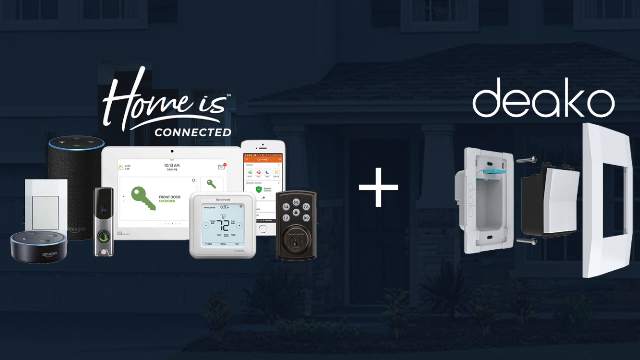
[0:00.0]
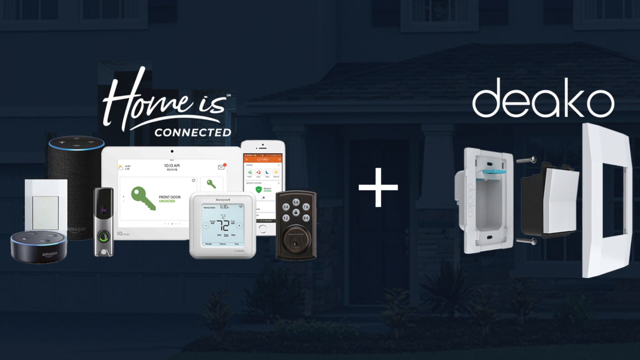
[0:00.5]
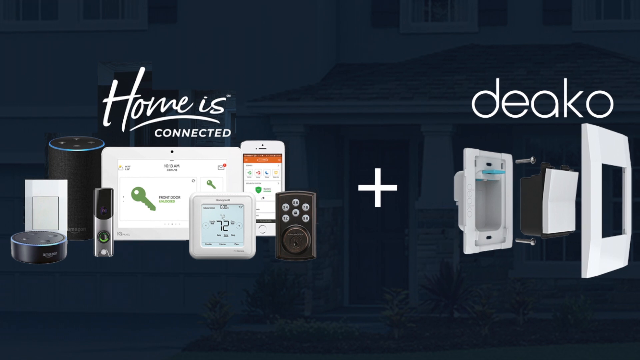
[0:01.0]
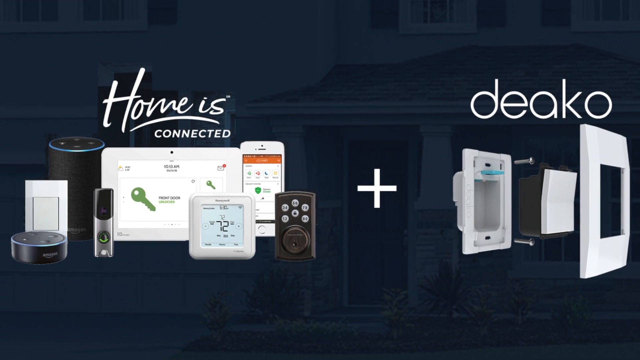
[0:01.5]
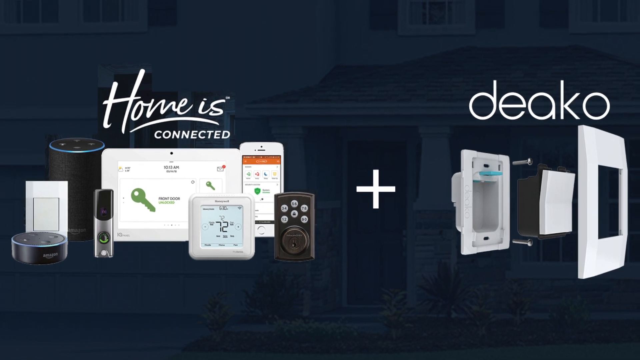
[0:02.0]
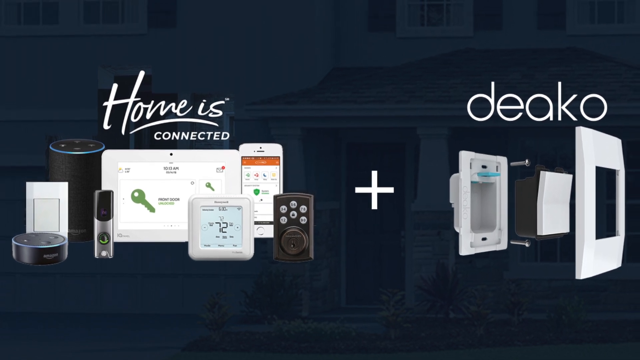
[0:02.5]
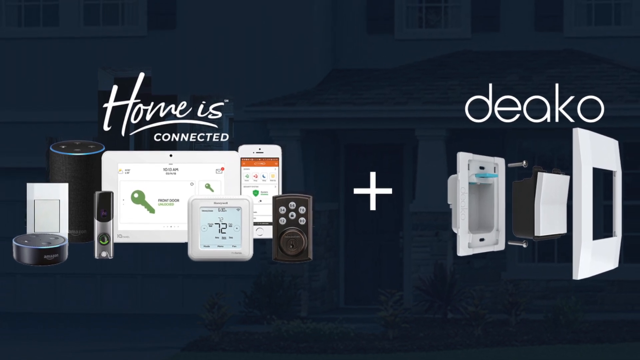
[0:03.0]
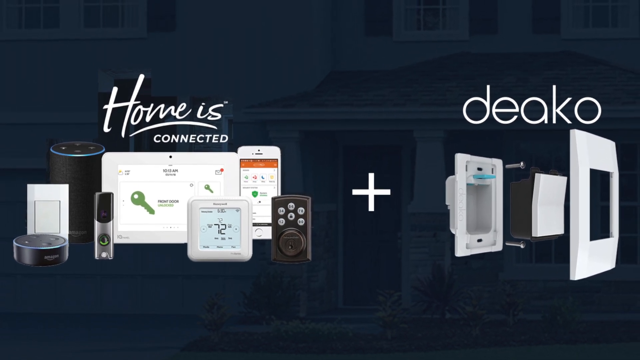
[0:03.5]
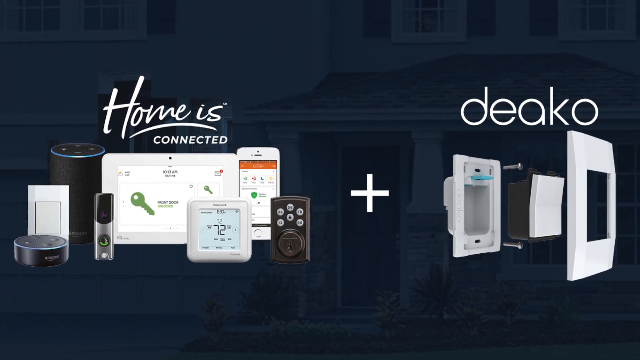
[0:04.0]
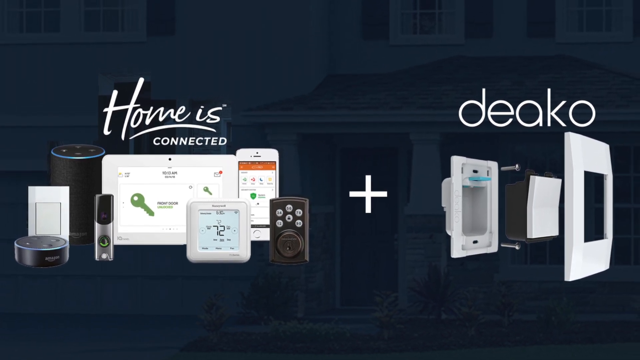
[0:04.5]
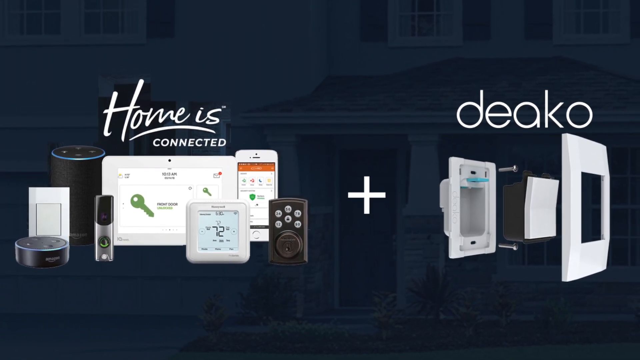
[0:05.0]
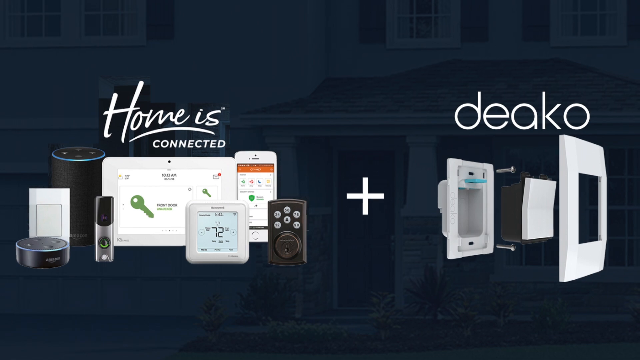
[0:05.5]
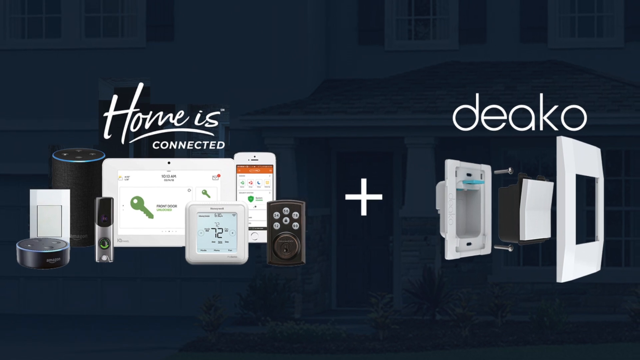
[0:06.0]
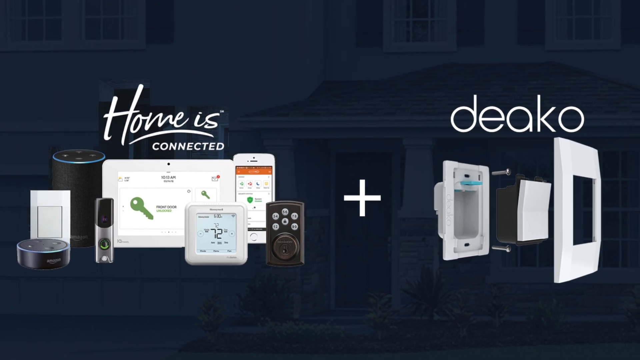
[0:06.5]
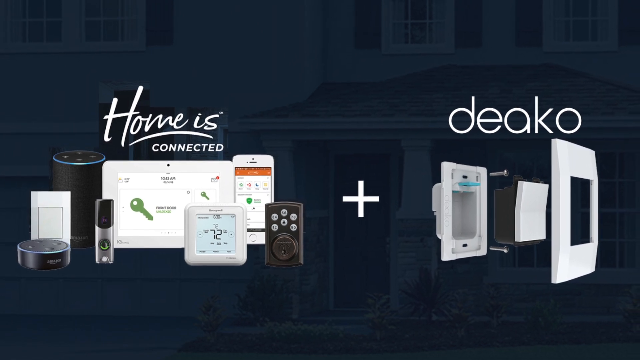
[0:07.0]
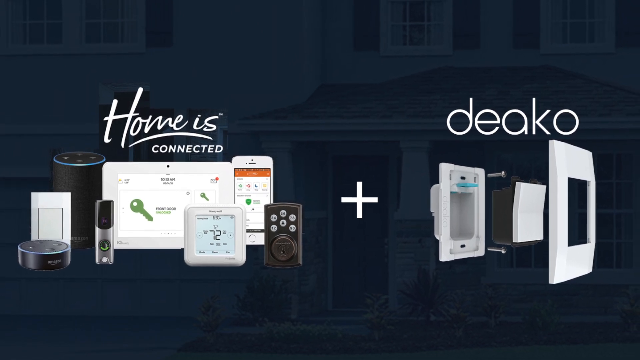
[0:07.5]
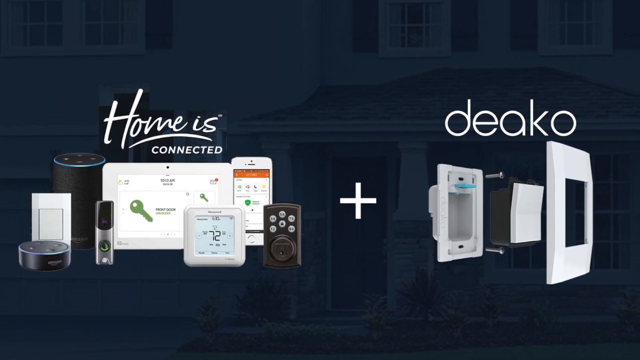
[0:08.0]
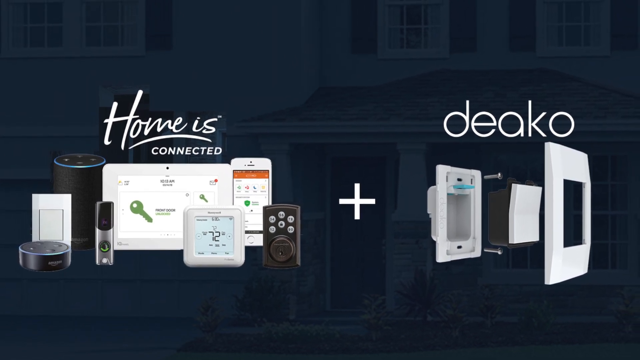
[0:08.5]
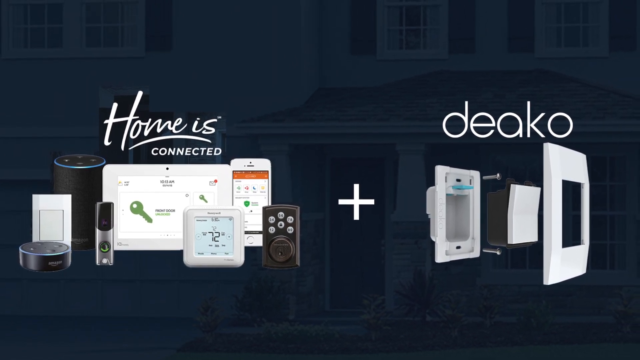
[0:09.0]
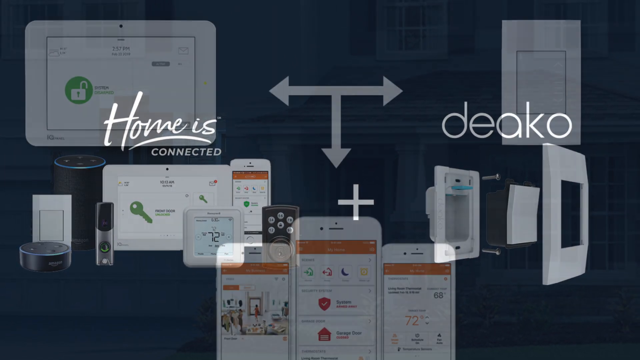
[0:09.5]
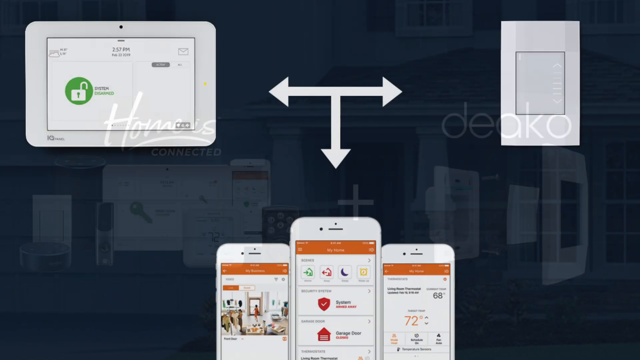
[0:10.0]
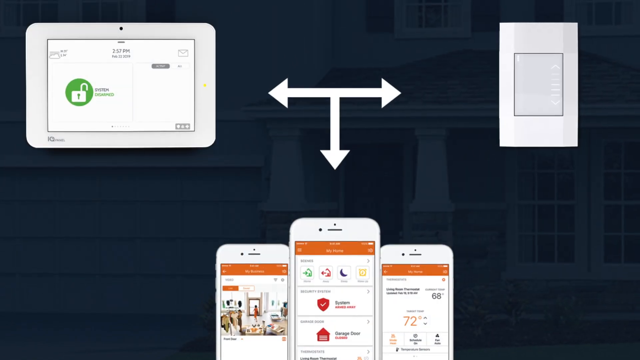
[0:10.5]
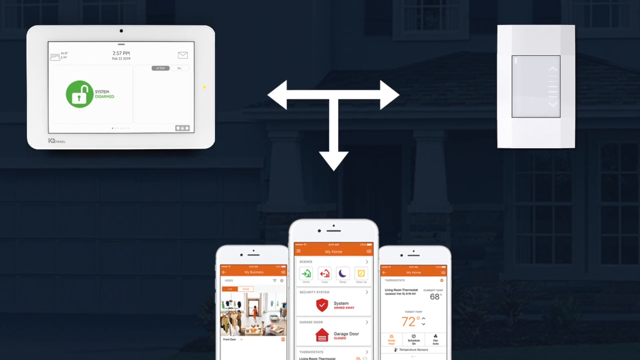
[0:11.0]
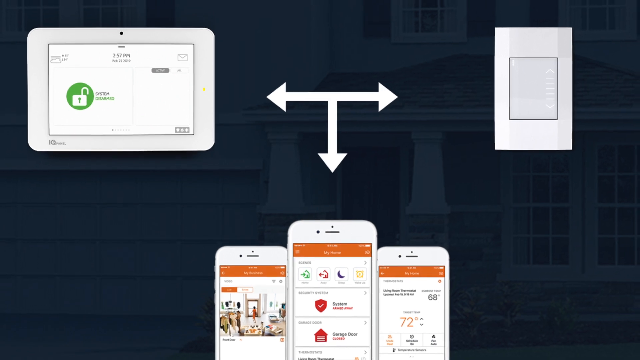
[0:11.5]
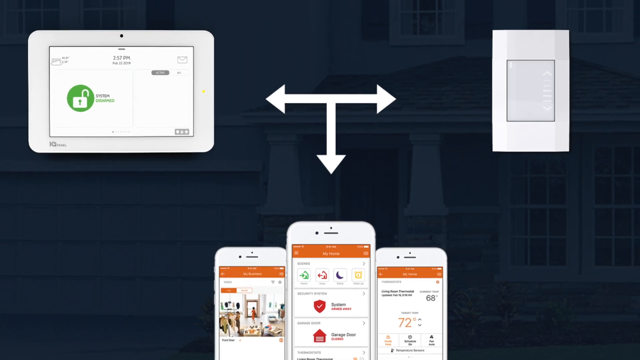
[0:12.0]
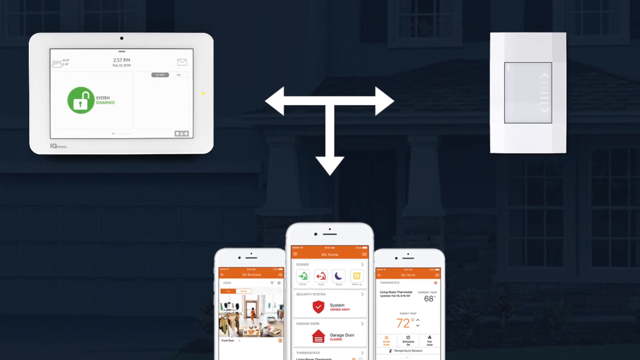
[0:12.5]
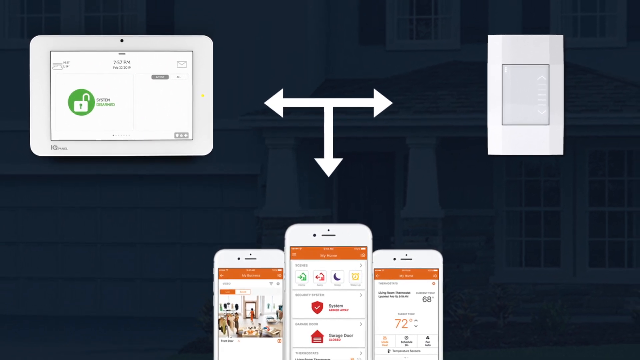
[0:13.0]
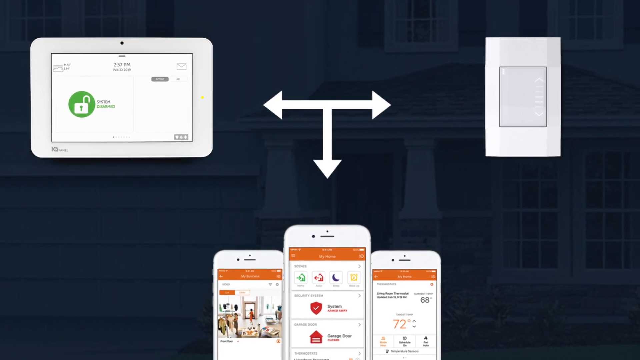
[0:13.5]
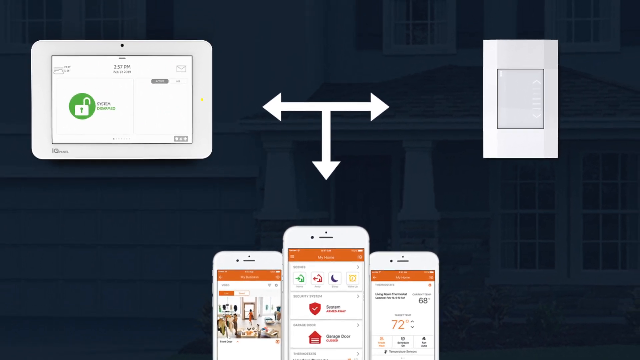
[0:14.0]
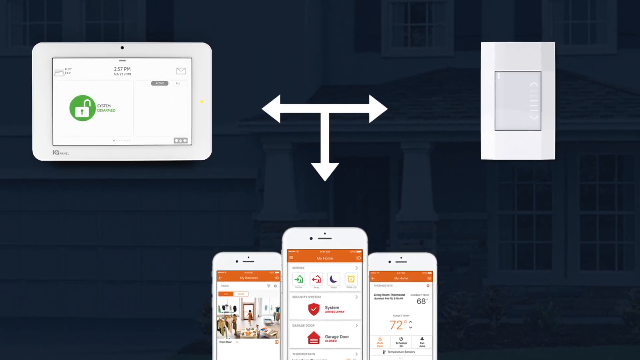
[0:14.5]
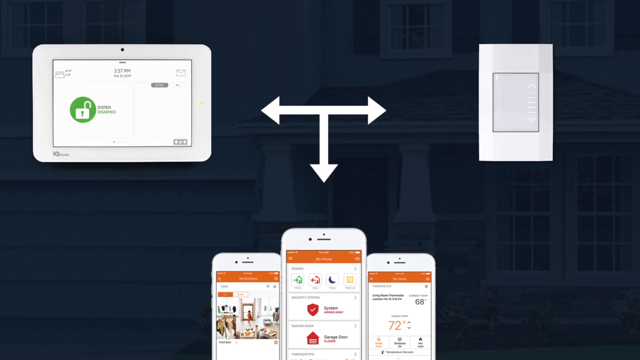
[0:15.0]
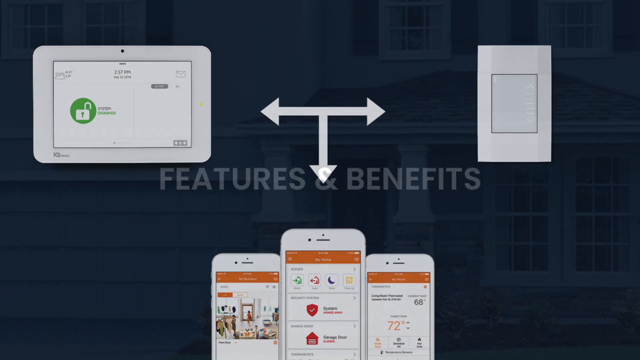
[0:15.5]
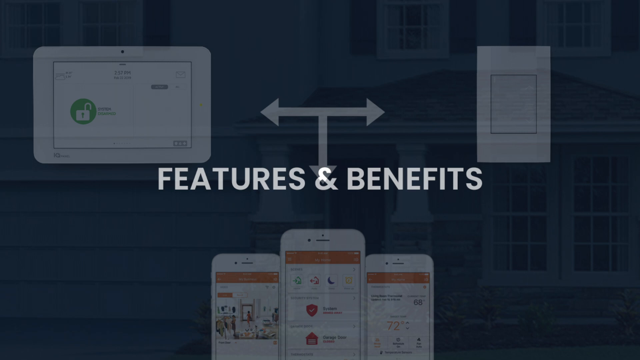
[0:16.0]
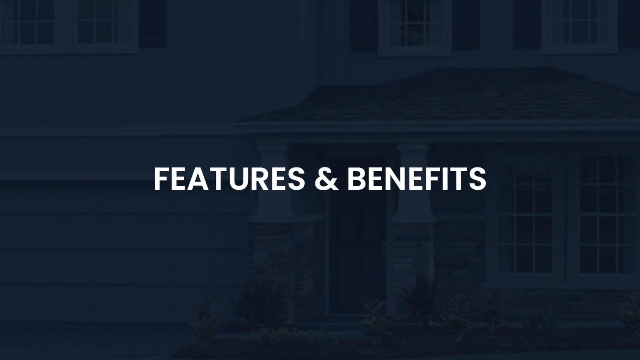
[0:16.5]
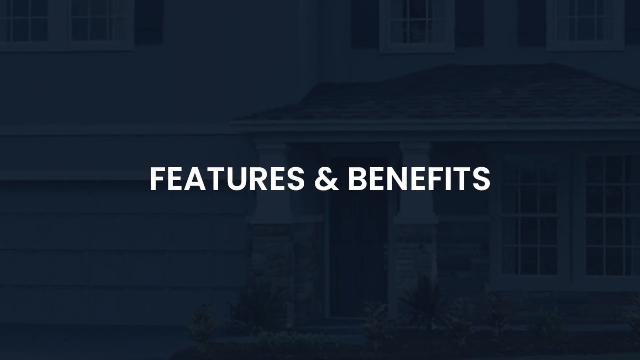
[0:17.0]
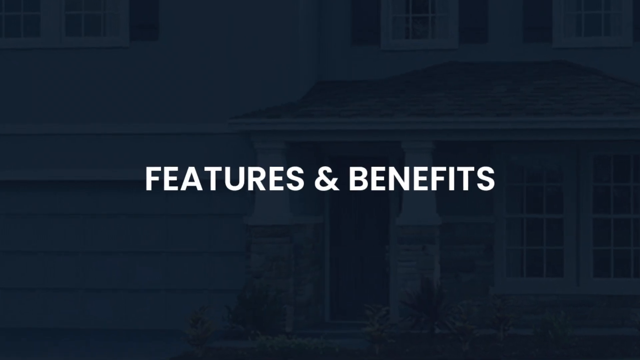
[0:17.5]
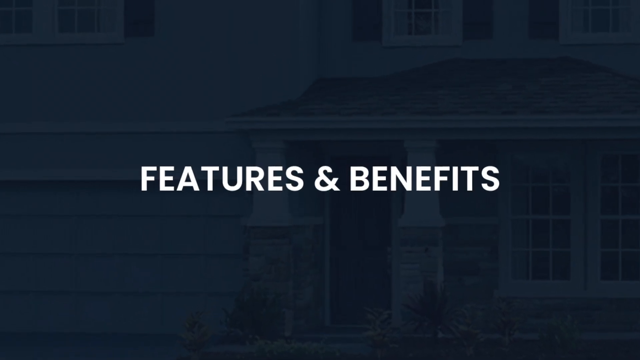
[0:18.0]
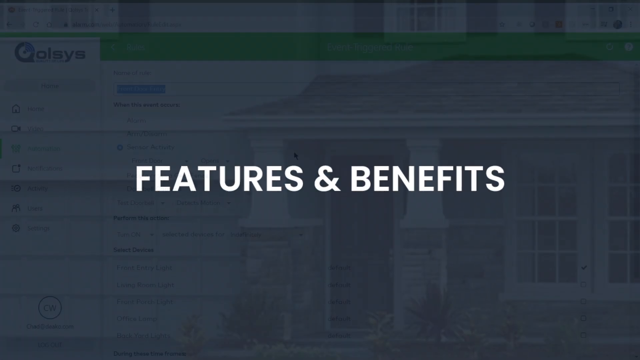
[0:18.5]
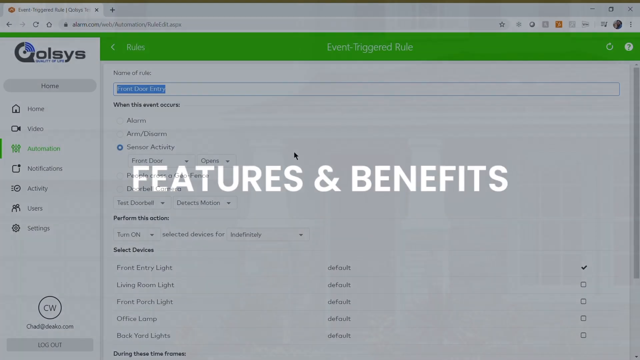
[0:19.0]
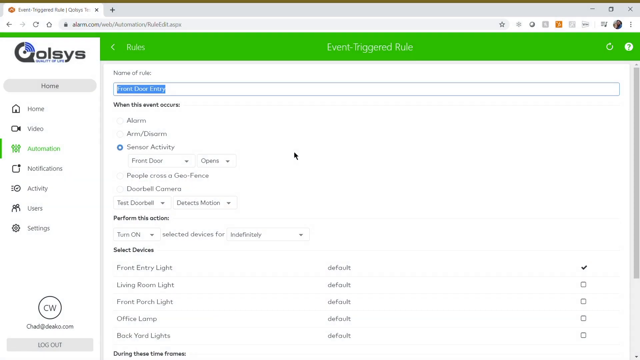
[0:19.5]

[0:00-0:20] The video is slightly wider than it is tall. A dark blue background is shaded to be very dim, and features of a house are visible in it: in the upper right there is a roof with a door below it, kind of in the center, and a couple of windows above that roof show a building or house behind it. On the left side is an overlaid logo with products, with white text reading "home is connected". Below it are several products, all Wi-Fi type products; from the back row there is a Bluetooth speaker, then a tablet, then a phone, and what looks like an Alexa, a smart thermostat, and a remote. On the right it says "DEAKO", with a light switch that is all taken apart, expanding to the right. The view slowly zooms out from that image and shows a tablet in the upper left, the light switch in the upper right, and three phones at the bottom. Arrows run between them: an arrow pointing left transitions into one pointing right, and that tees down, pointing at the phones at the bottom.